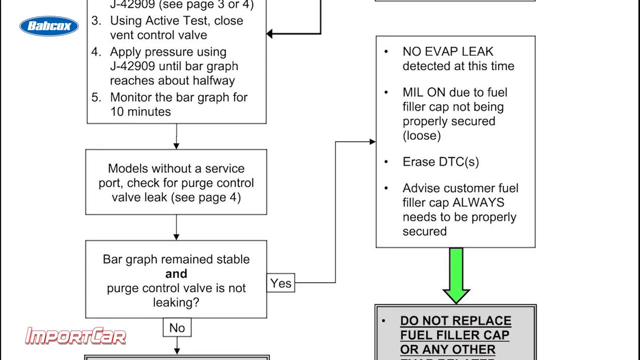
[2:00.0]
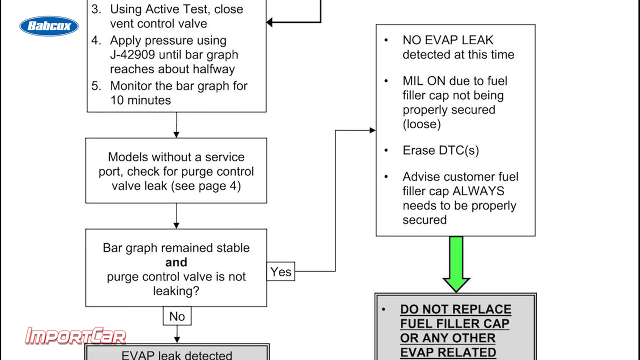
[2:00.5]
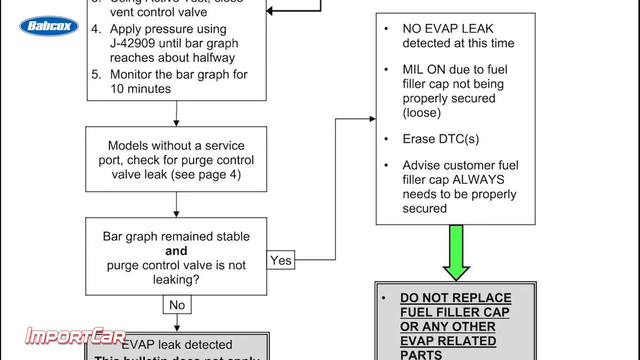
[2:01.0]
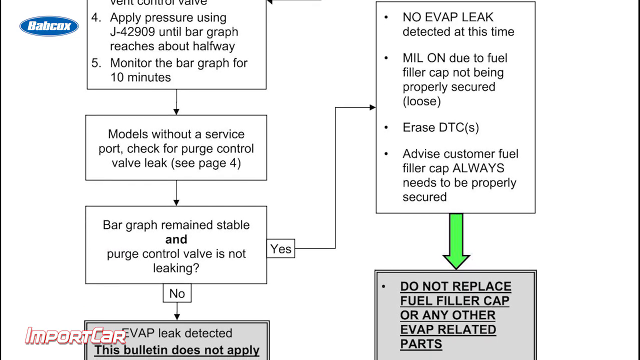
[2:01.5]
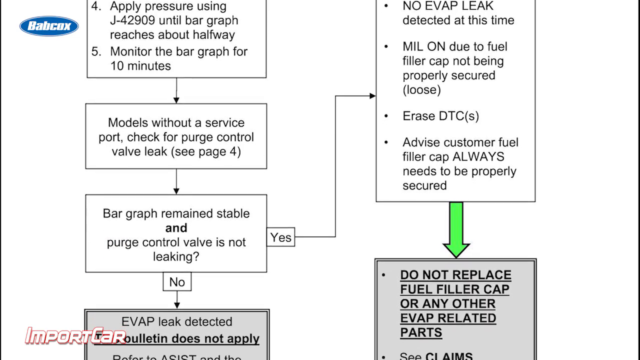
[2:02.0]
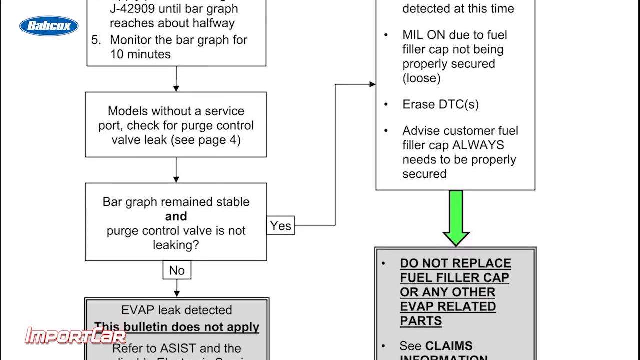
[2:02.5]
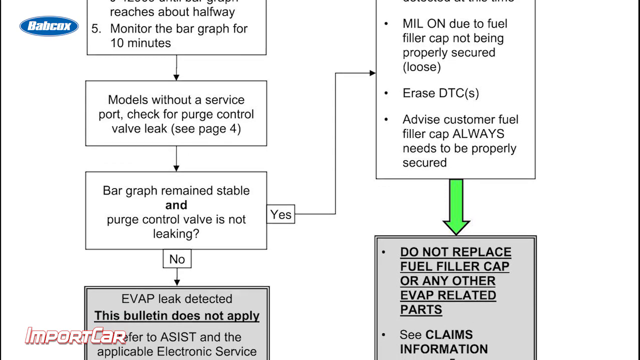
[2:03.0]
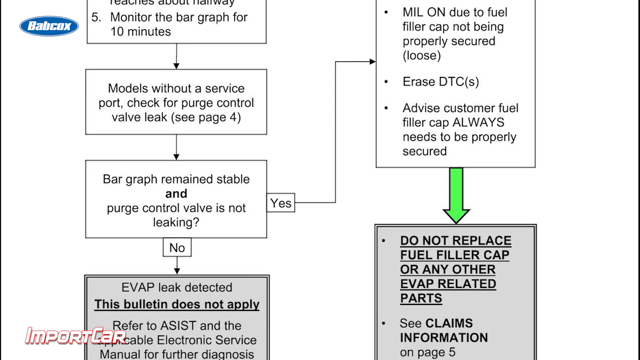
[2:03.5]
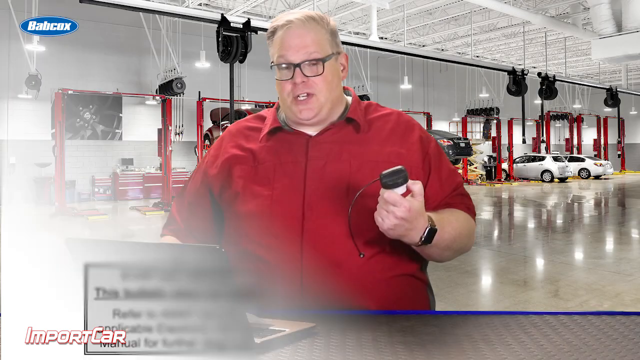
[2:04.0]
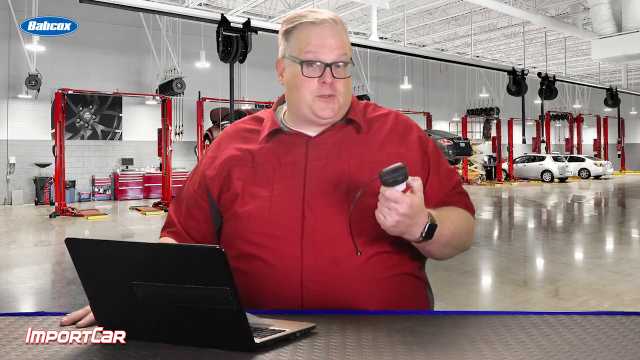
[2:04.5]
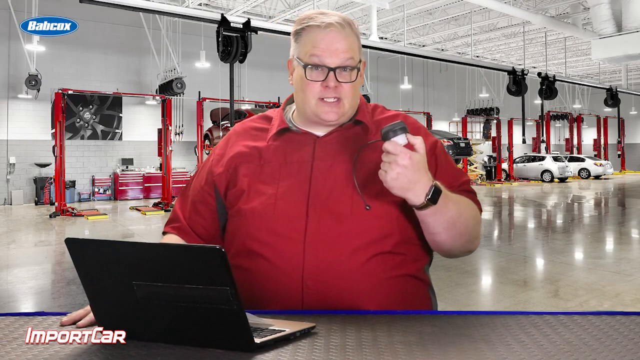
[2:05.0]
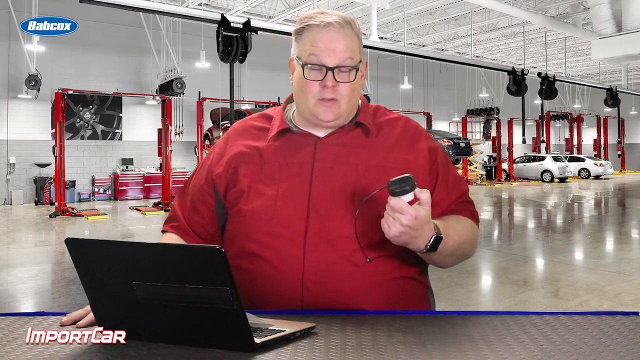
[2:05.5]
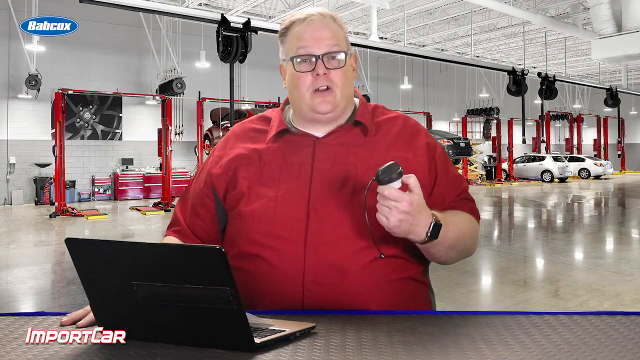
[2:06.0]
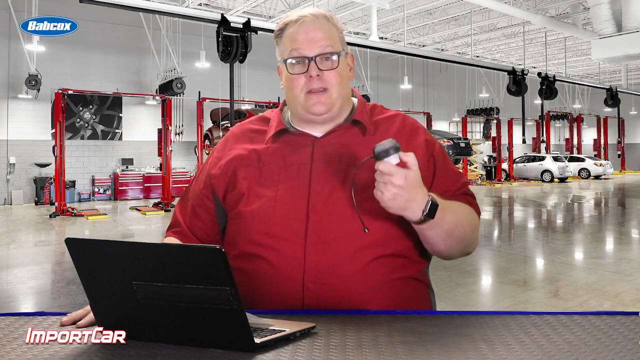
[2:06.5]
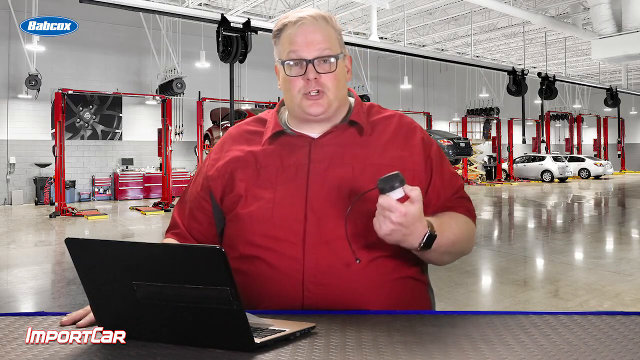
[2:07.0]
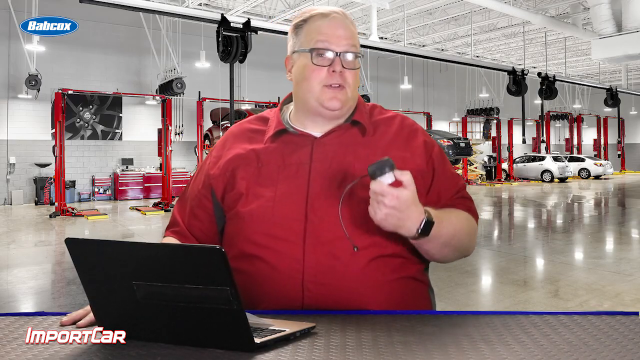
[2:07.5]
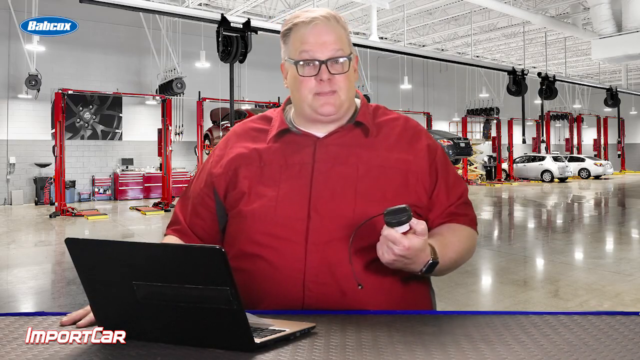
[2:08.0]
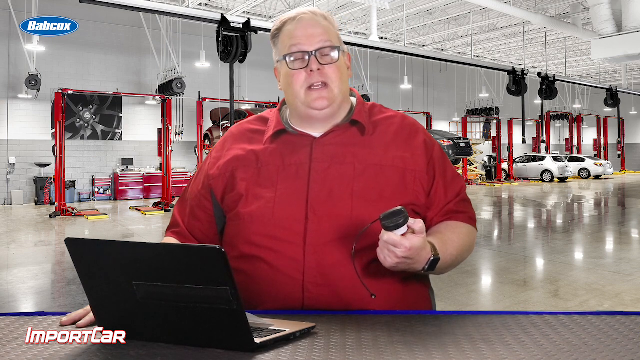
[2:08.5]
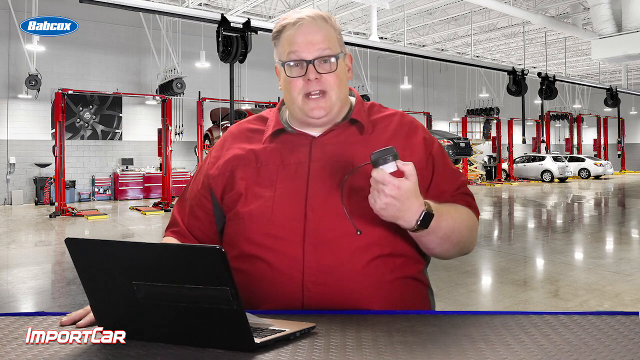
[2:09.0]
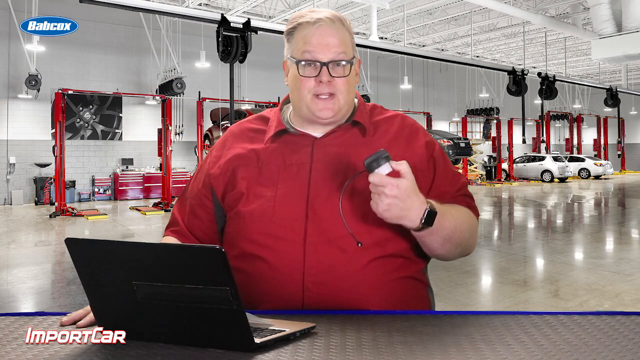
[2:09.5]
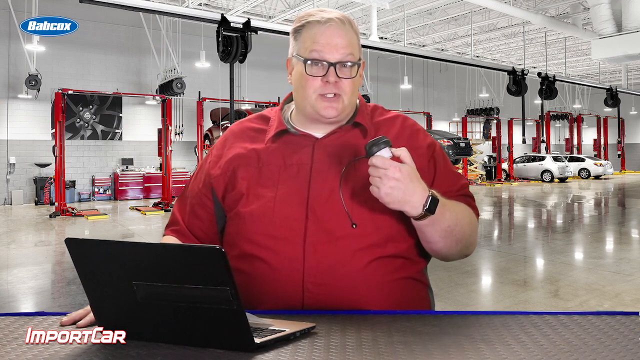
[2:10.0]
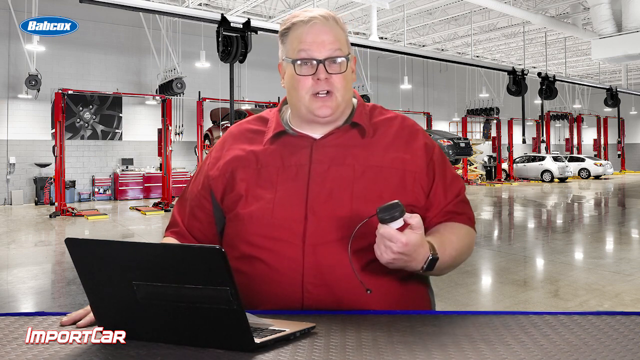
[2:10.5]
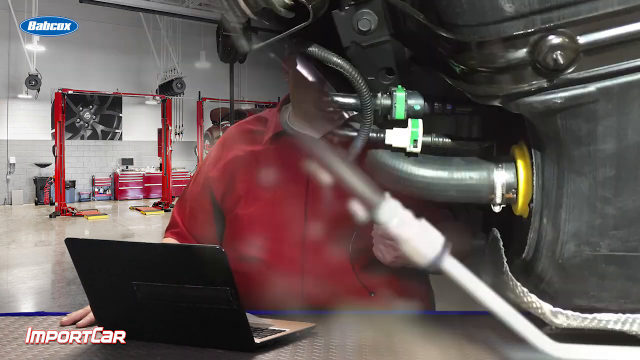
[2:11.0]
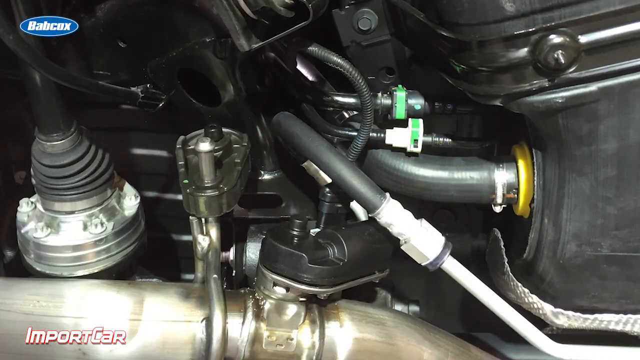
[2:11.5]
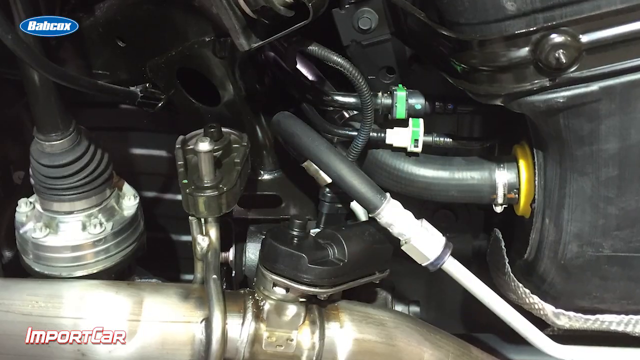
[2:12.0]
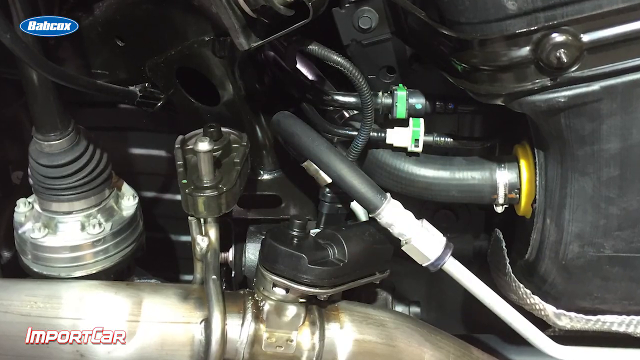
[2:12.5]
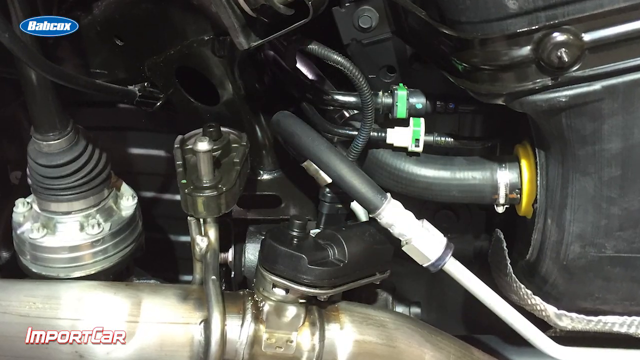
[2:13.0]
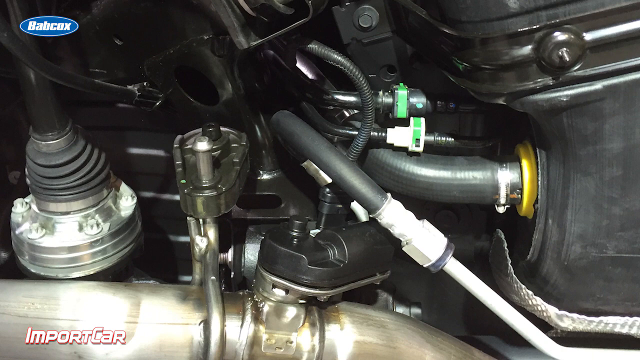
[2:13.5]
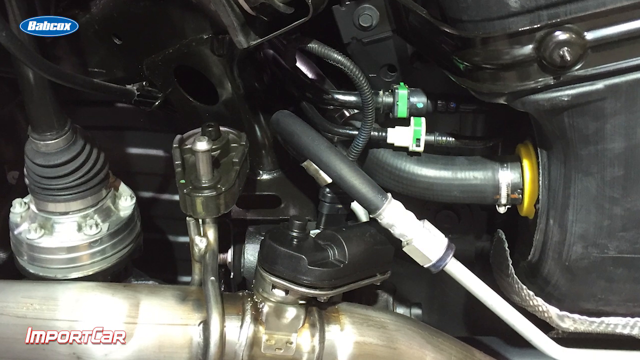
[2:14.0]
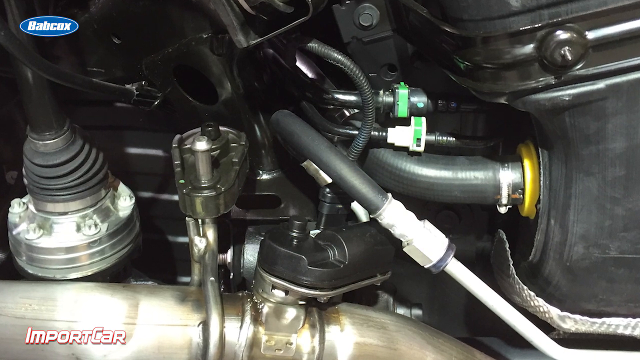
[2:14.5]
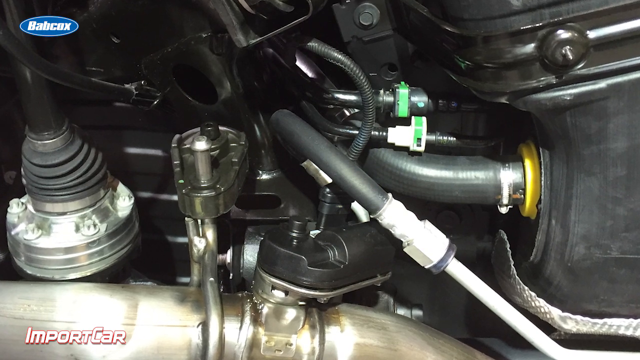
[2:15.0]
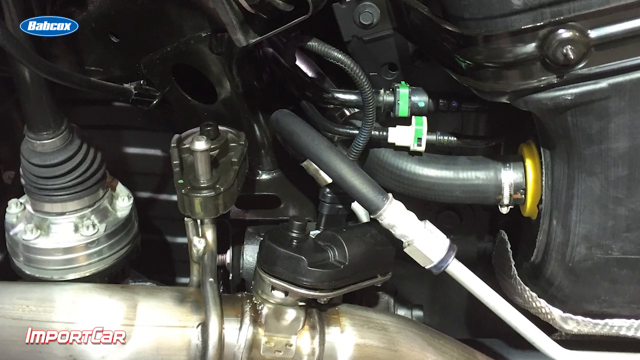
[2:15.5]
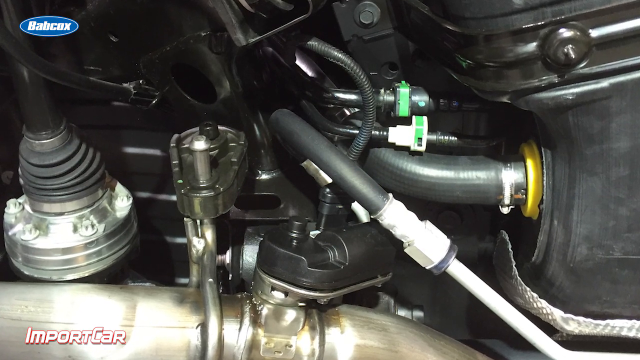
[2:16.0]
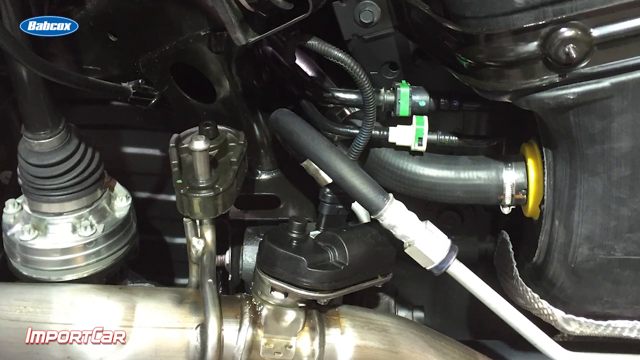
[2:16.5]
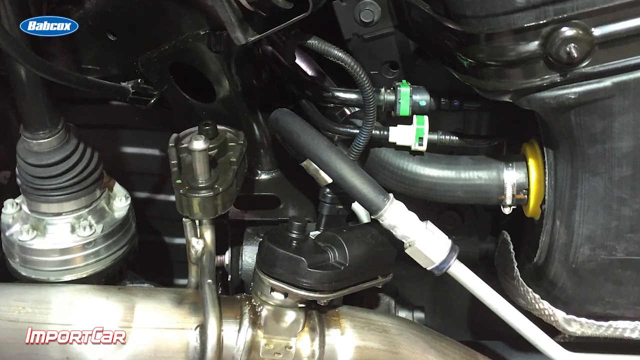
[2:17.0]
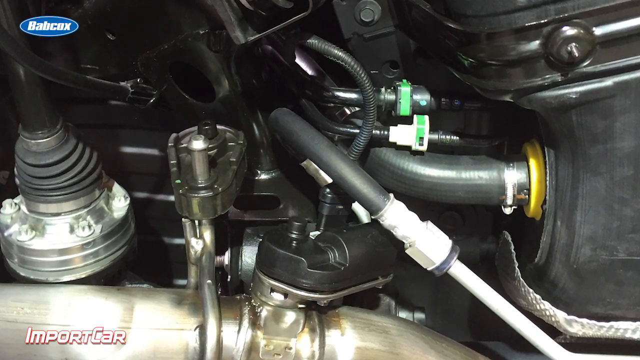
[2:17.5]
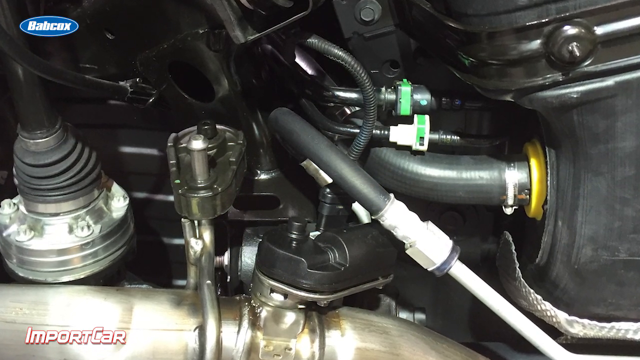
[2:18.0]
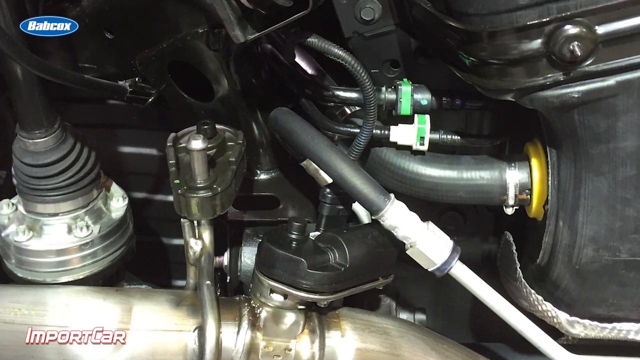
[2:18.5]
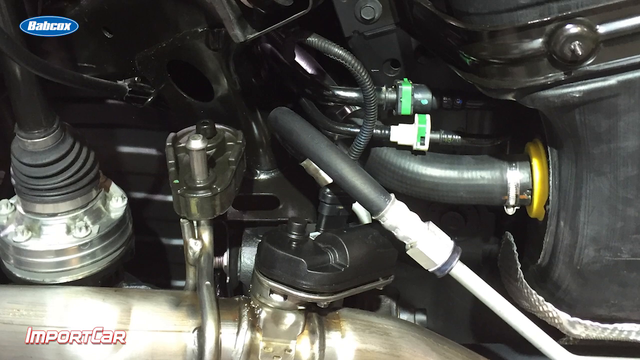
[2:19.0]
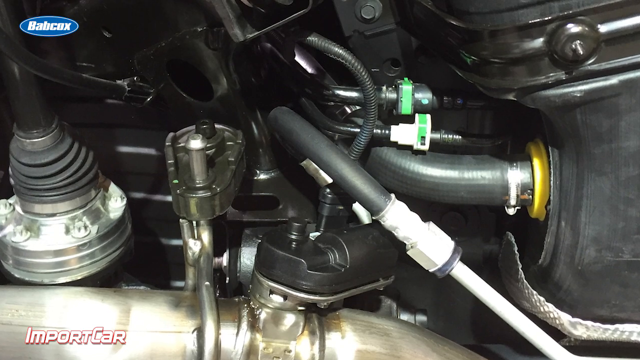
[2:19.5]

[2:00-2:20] A graph is shown with words including "test closed vent control valve", "monitor the bar graph", "models with that service port", "bar graph remains stable" and "purge control valve", along with the message "do not replace the fuel filler cap or any other evap". The large man returns, holding a black item in his right hand that may or may not be the gas cap. Next come views of inner engine parts with hoses and the fuel filler cap, then more hoses and inner parts, followed by a printed instruction sheet.